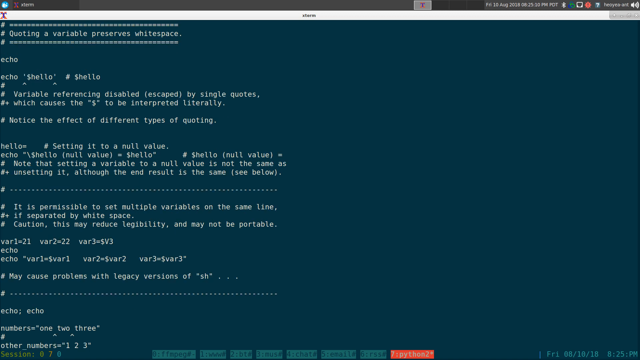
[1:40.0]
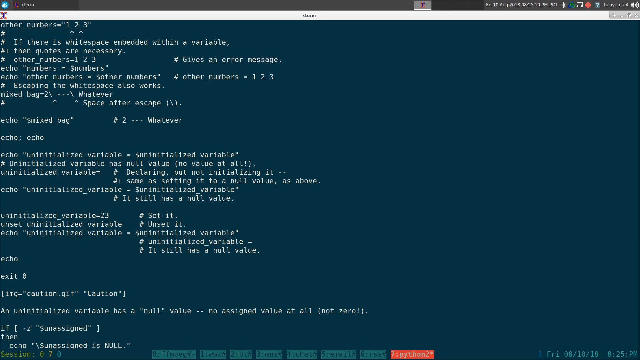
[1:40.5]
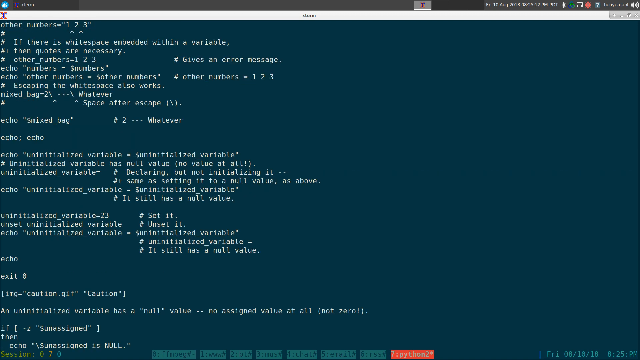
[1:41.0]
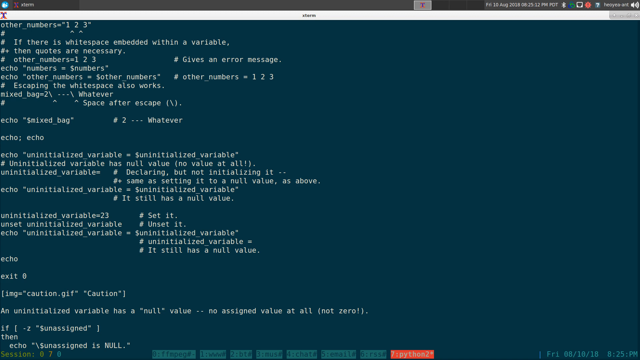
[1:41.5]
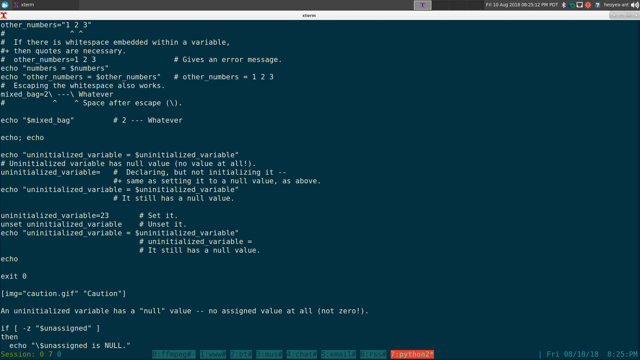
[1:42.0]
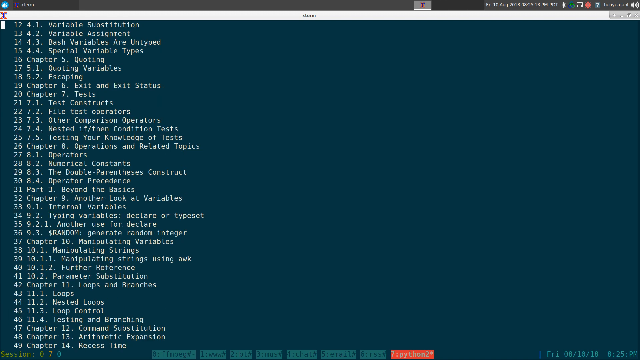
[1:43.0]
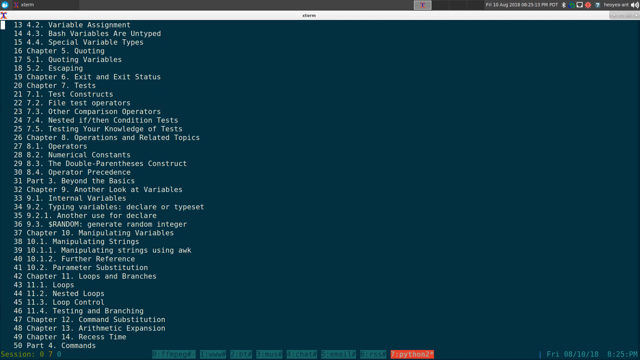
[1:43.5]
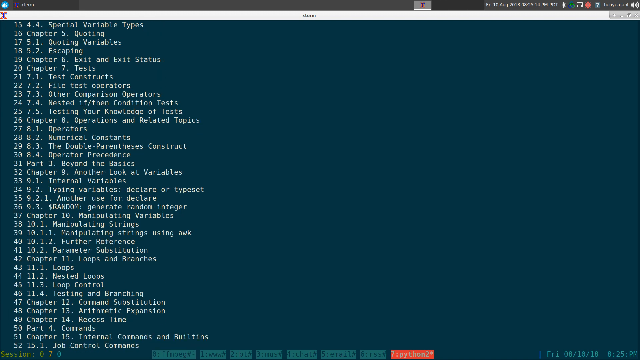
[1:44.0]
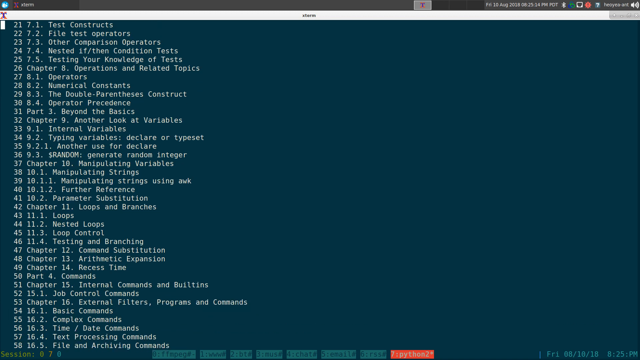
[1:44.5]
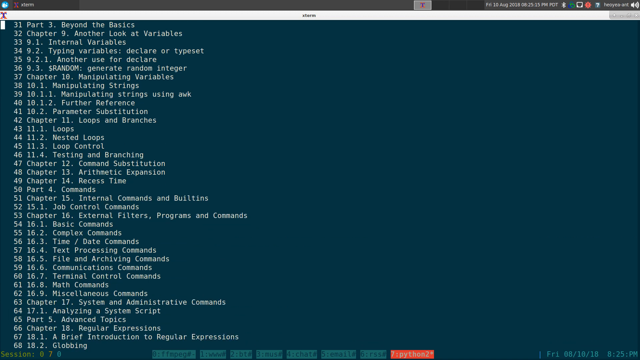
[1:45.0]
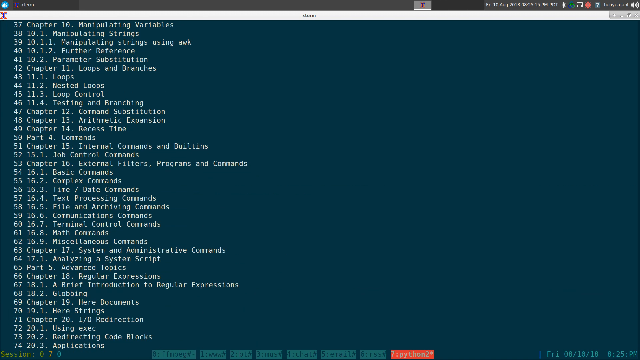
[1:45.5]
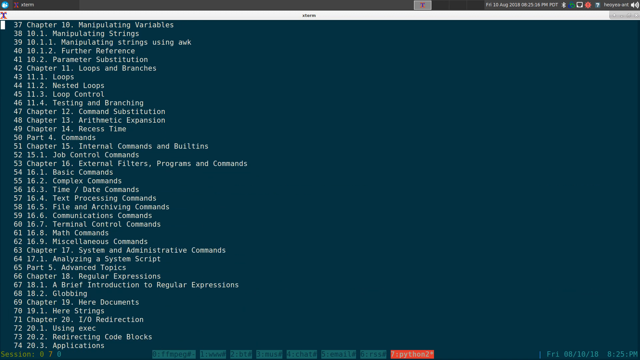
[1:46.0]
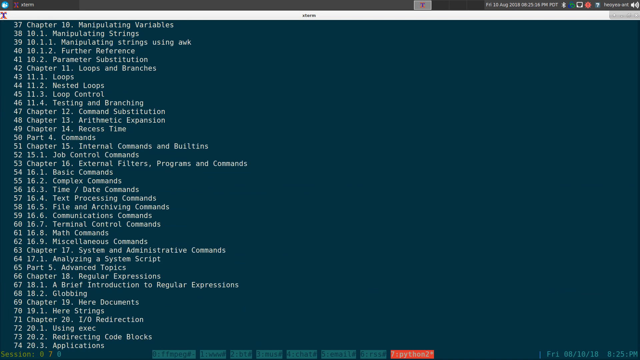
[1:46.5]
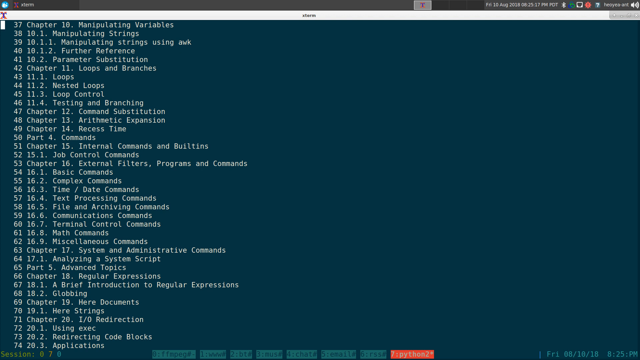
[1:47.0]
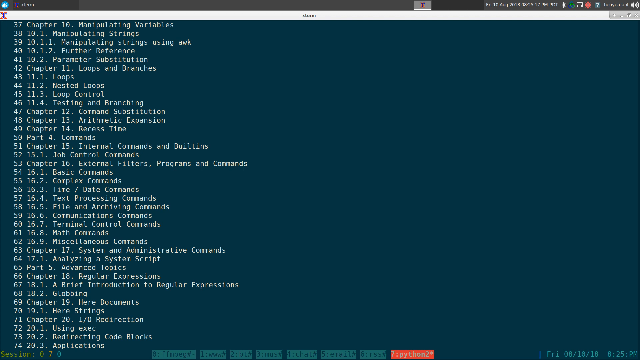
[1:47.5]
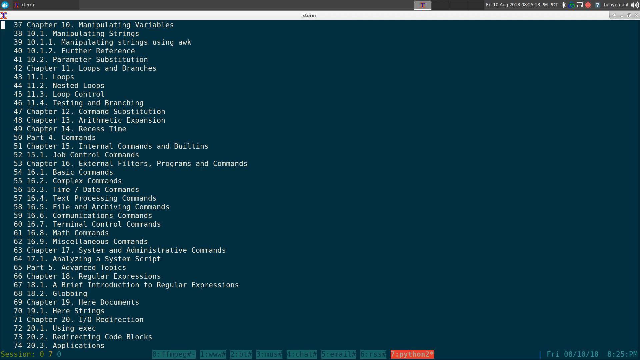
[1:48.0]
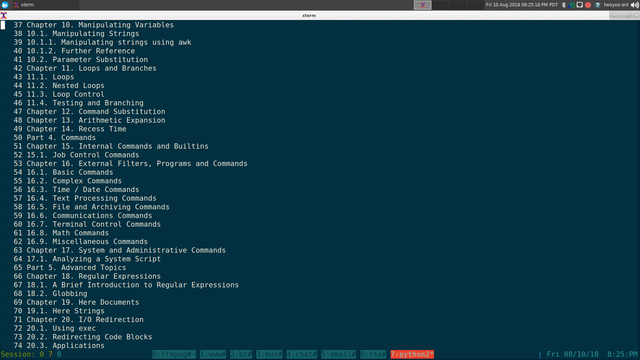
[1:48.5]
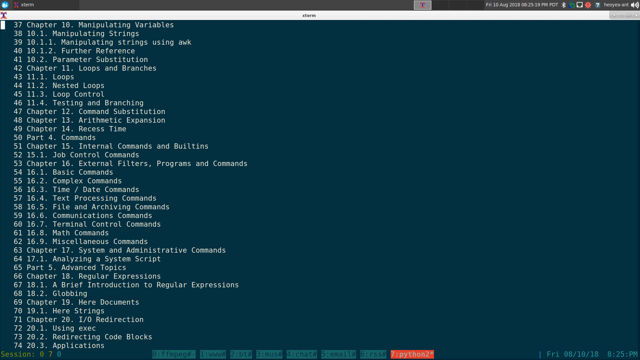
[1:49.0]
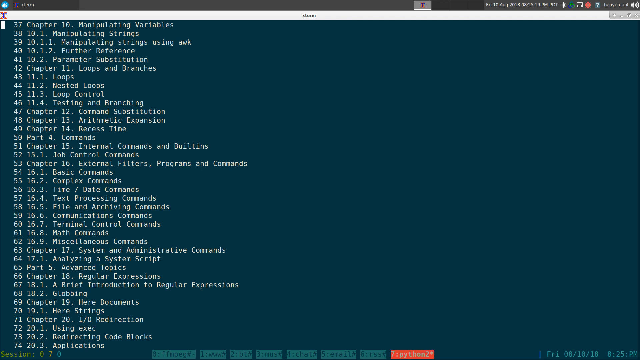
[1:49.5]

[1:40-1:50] The user is on the "coding a variable preserves white space" page and scrolls through it for a moment before closing it. The cursor returns to variable substitution, and the user scrolls all the way down; chapter 20 is visible in the table of contents, but the user hovers over "chapter 10 manipulating variables". The cursor blinks on line 37, where chapter 10 is. Four subheadings are under chapter 10: "10.1 manipulating strings", "10.1.1 manipulating strings using AWK", 10.1.2, and "10.2 parameter substitution".